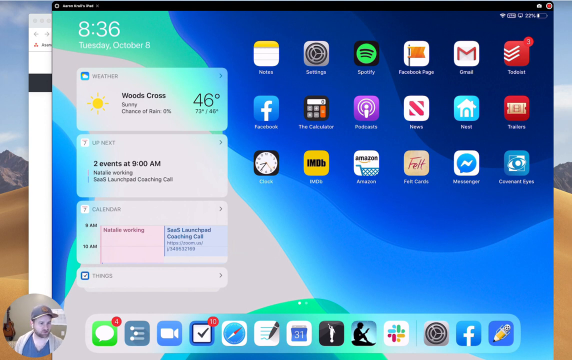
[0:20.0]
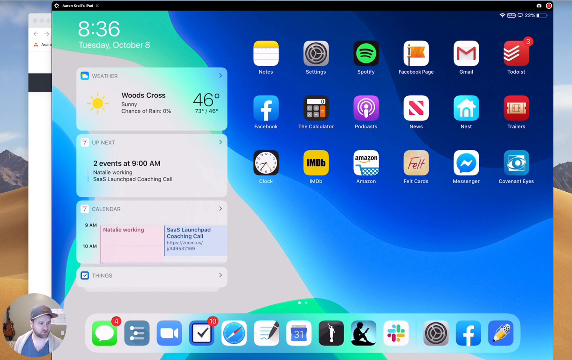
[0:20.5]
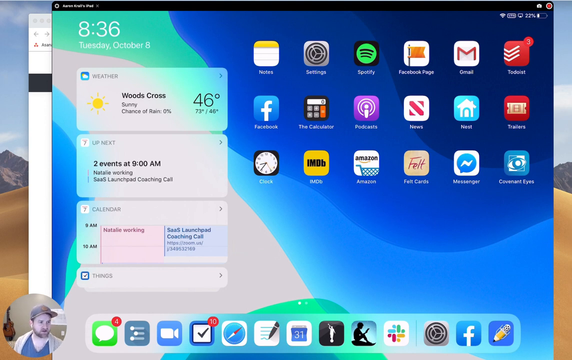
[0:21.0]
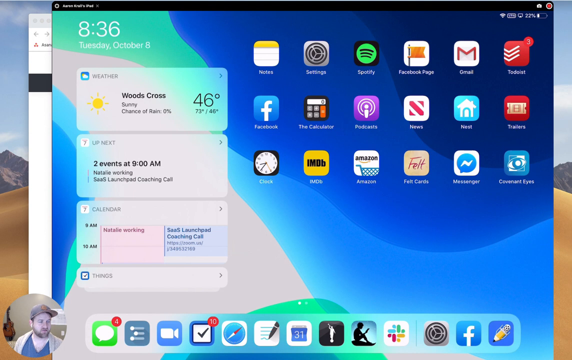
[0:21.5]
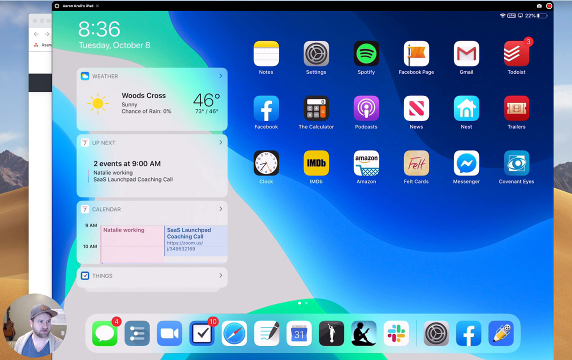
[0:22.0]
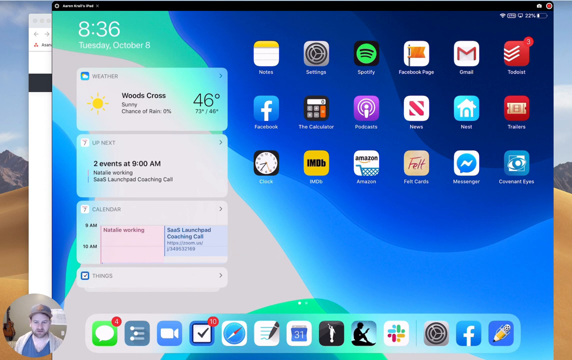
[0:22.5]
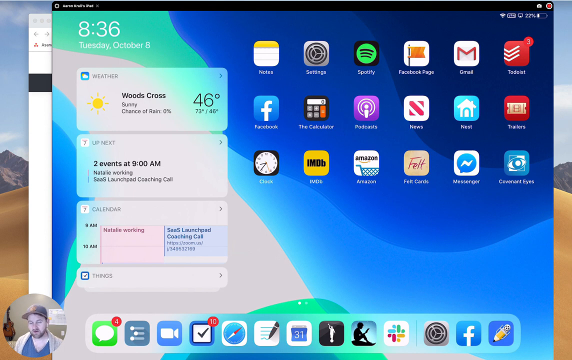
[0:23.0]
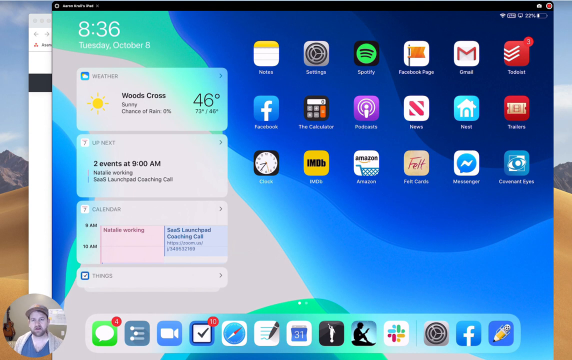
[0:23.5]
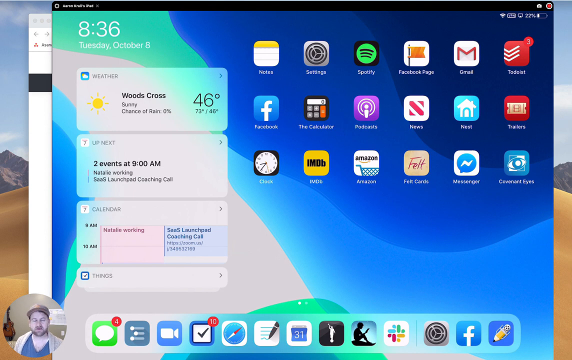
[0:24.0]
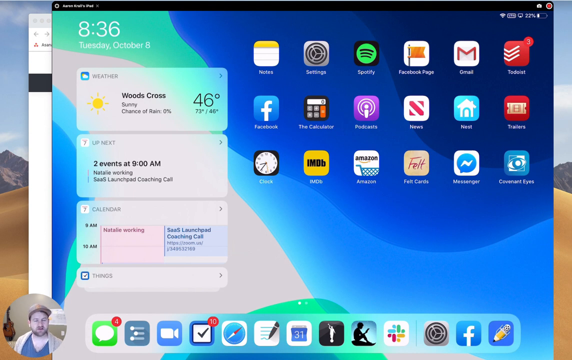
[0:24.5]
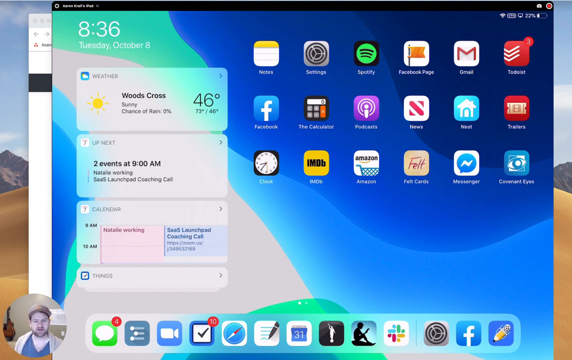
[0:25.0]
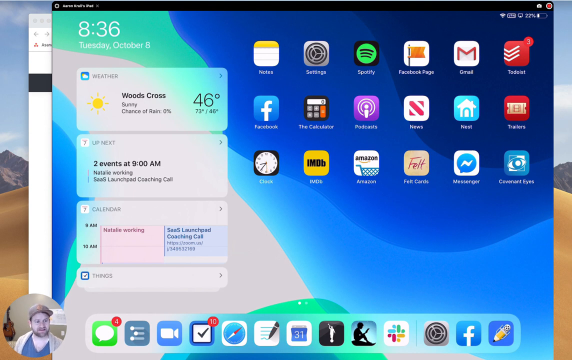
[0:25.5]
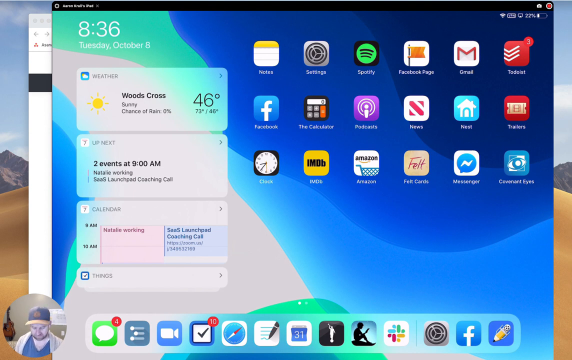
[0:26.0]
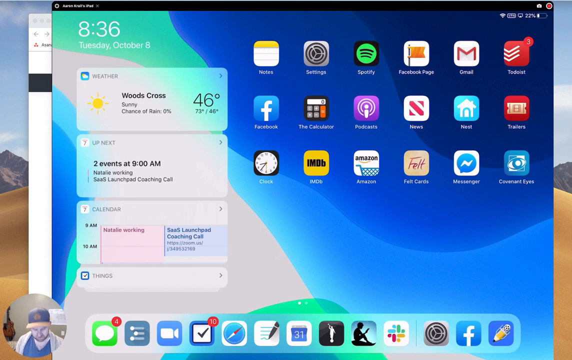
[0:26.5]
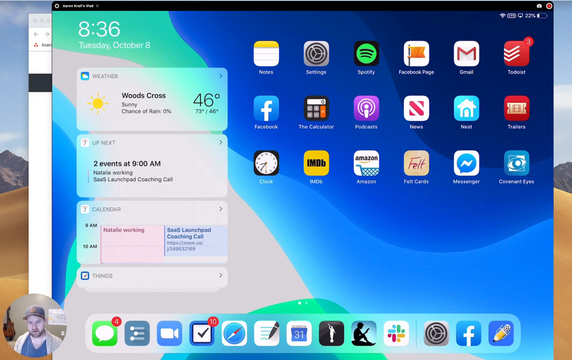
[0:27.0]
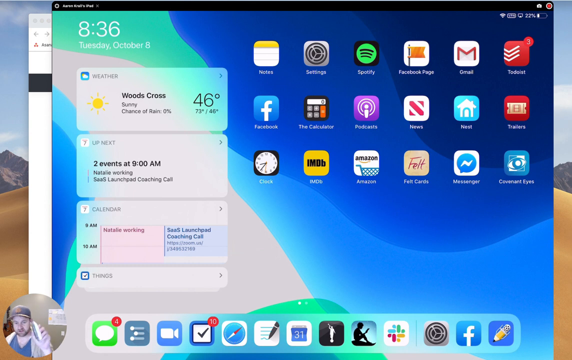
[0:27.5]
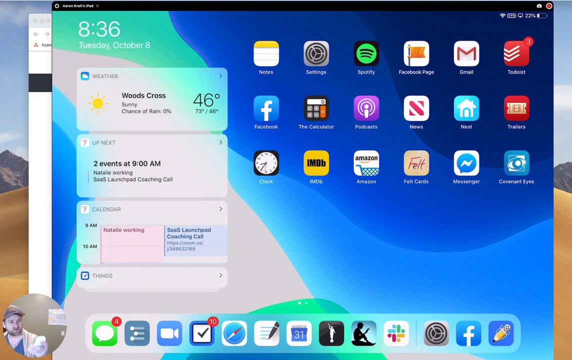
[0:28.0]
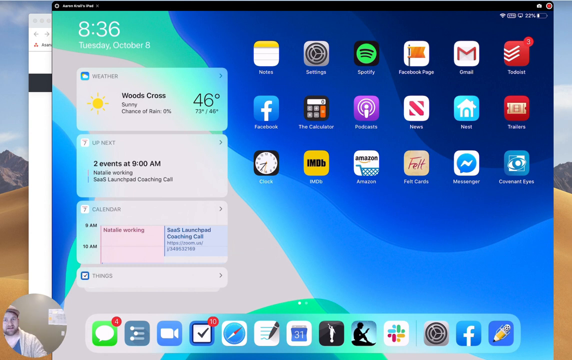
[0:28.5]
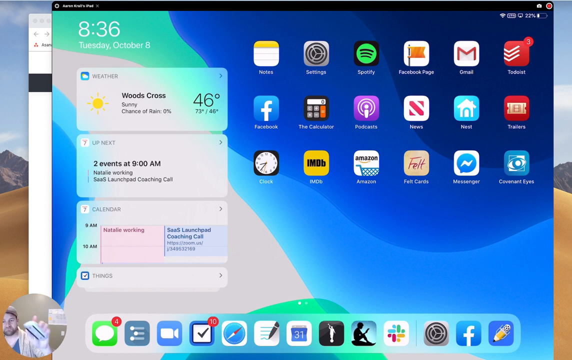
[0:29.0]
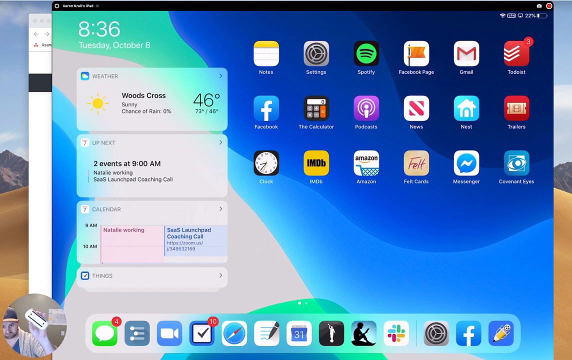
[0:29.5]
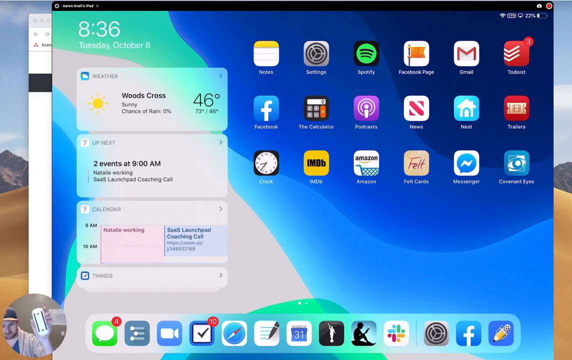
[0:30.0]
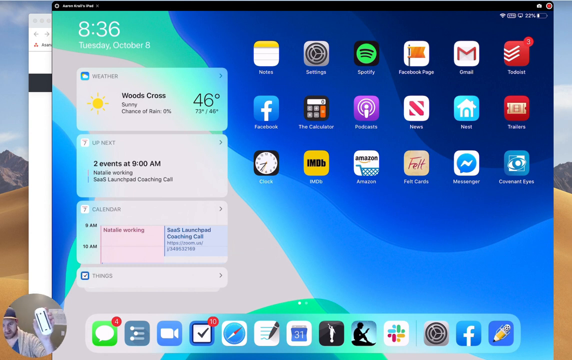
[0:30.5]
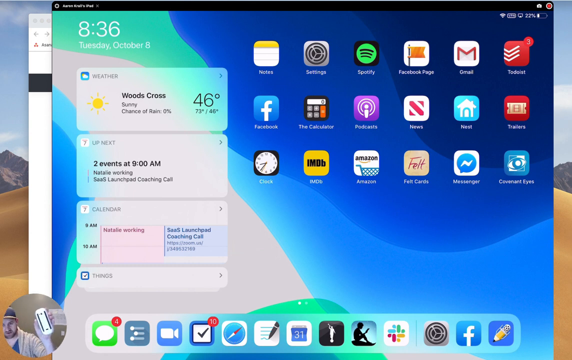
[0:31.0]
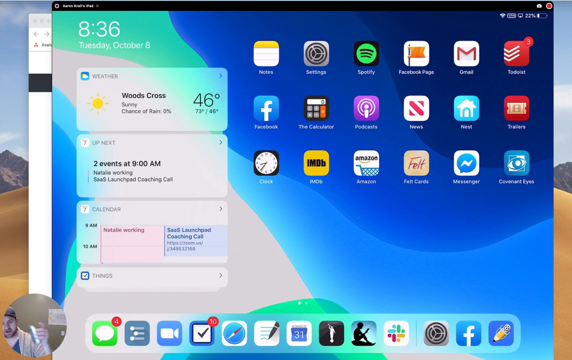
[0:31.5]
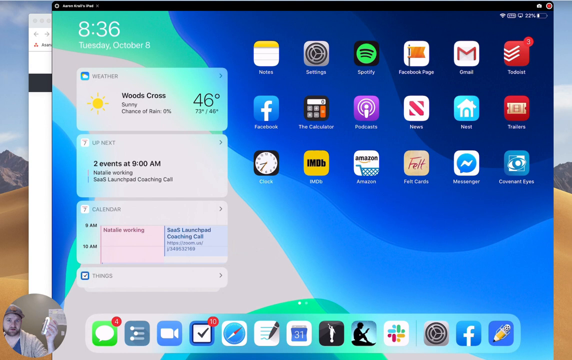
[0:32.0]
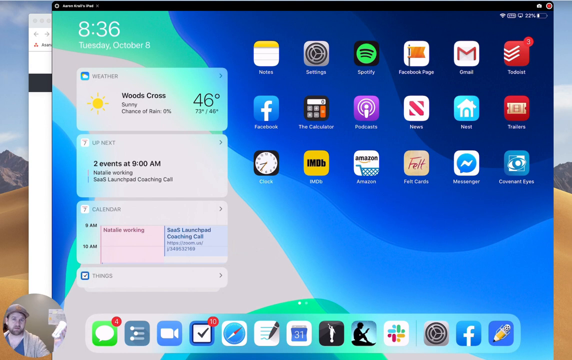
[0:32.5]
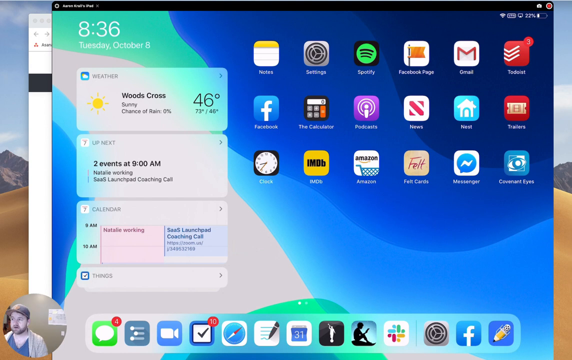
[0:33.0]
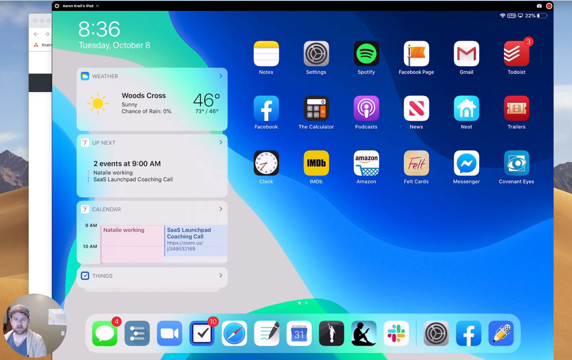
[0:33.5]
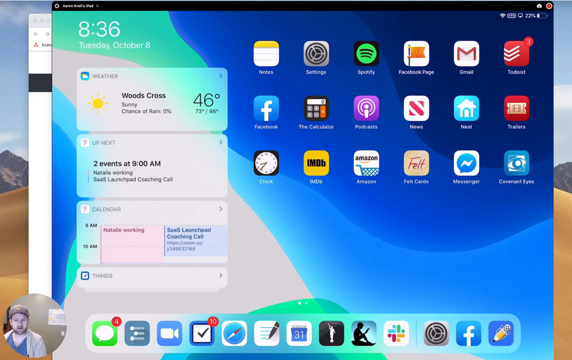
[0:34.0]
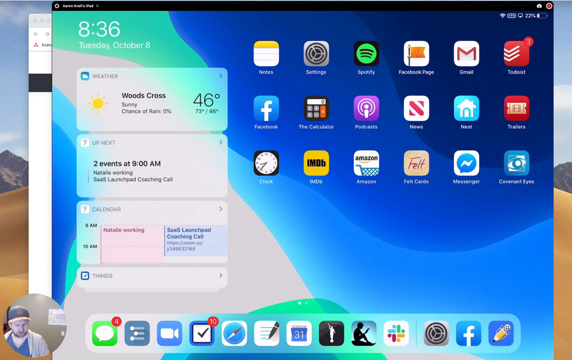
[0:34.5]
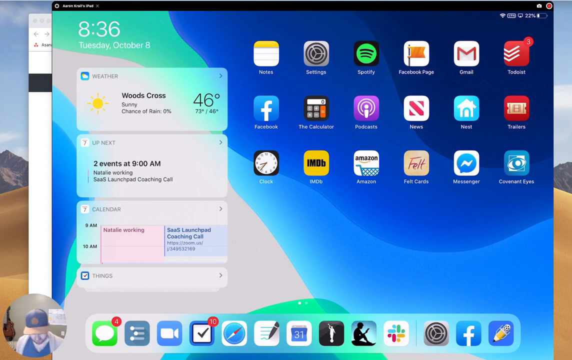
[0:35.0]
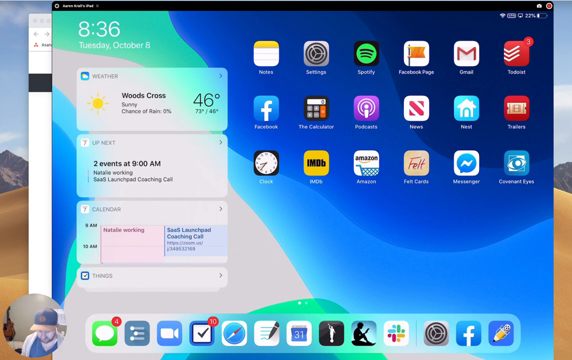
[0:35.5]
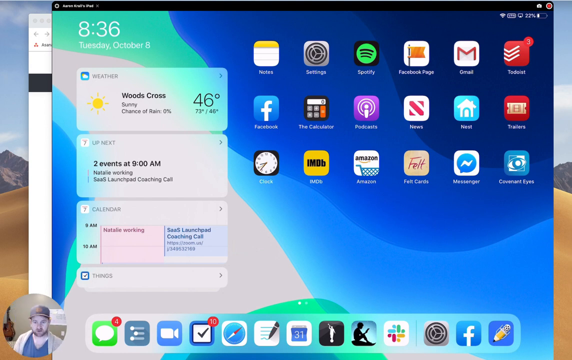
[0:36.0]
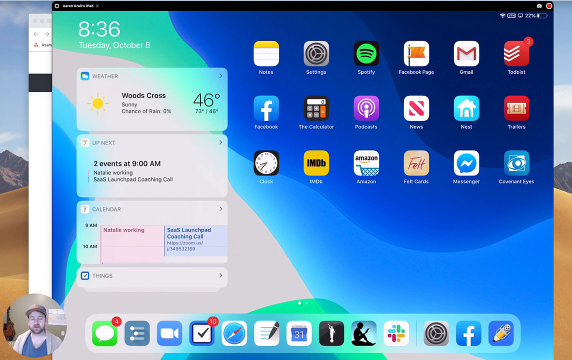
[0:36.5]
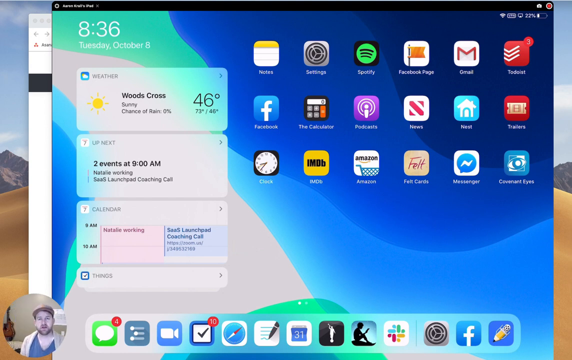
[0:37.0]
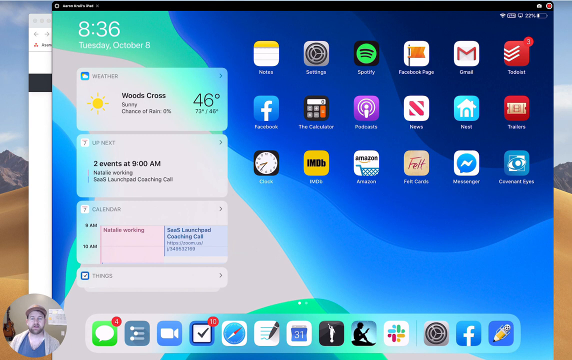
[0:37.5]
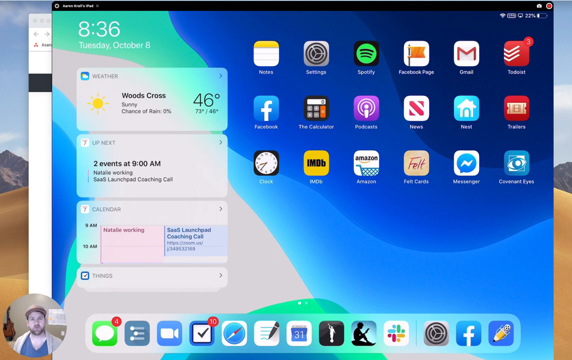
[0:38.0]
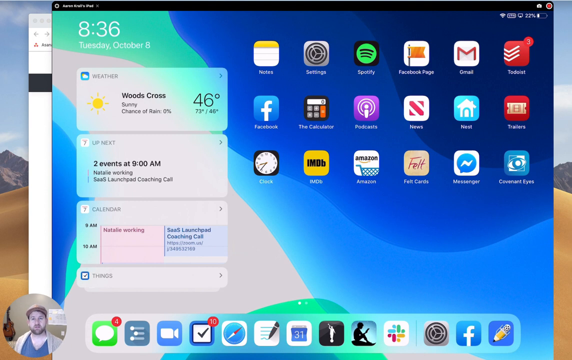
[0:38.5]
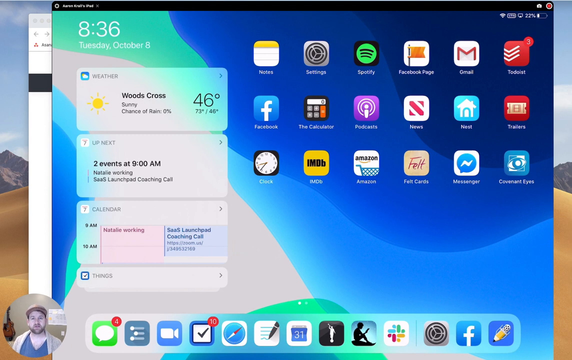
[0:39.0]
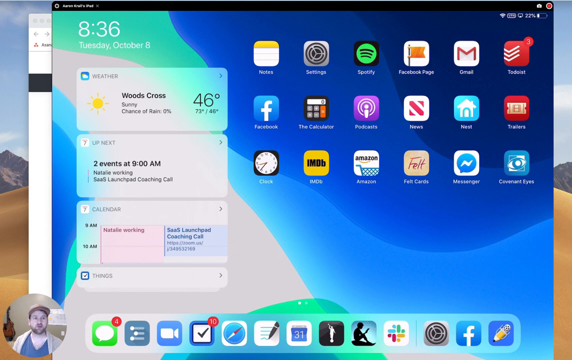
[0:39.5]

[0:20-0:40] A desktop screen with many apps is in the background. In the top right section of the screen are various settings and labels for different apps. In the top left section, the screen says "West Cross Supply", "Chance of rain, 46 degrees" and "two events at 9 a.m." Several different sections are shown. The background is very dark in the top right corner.